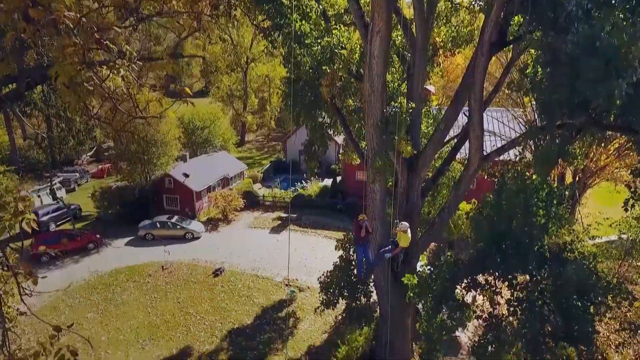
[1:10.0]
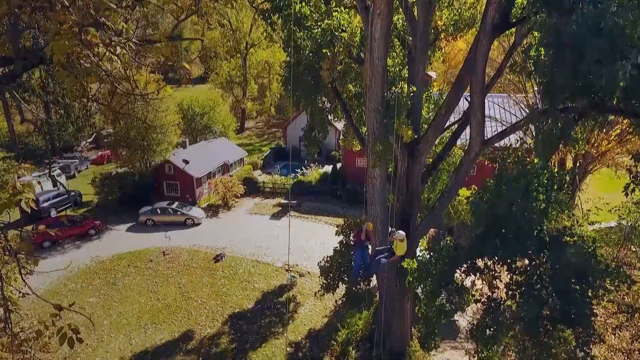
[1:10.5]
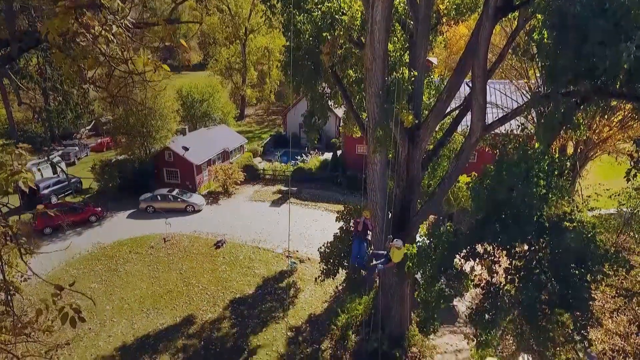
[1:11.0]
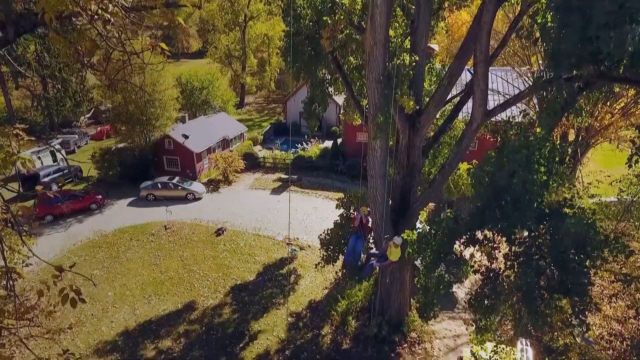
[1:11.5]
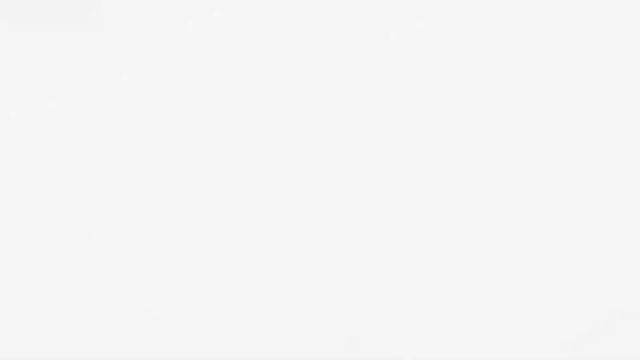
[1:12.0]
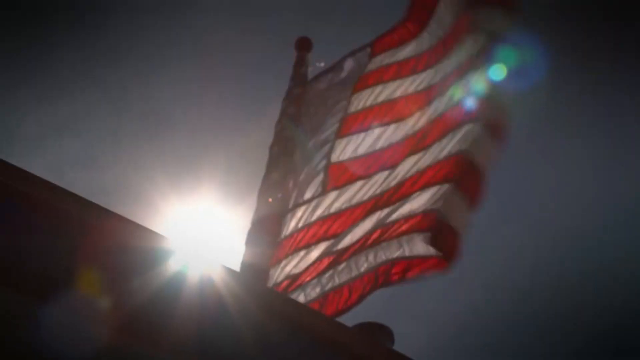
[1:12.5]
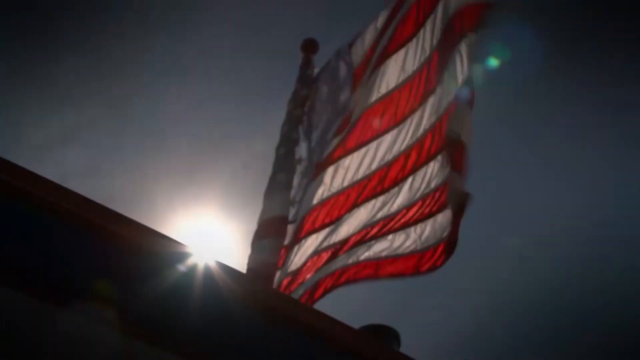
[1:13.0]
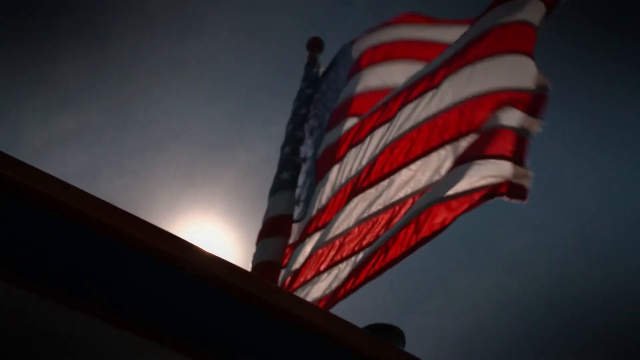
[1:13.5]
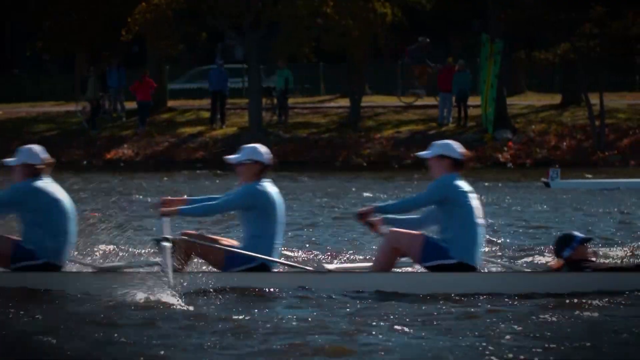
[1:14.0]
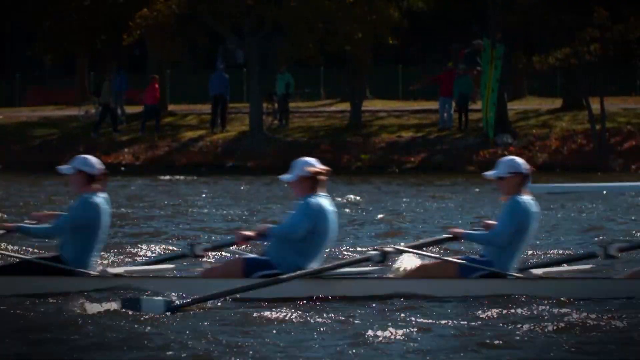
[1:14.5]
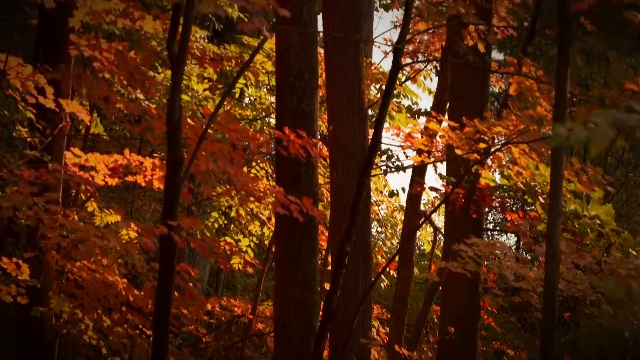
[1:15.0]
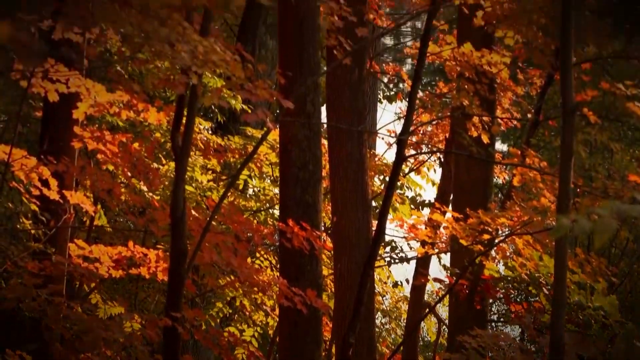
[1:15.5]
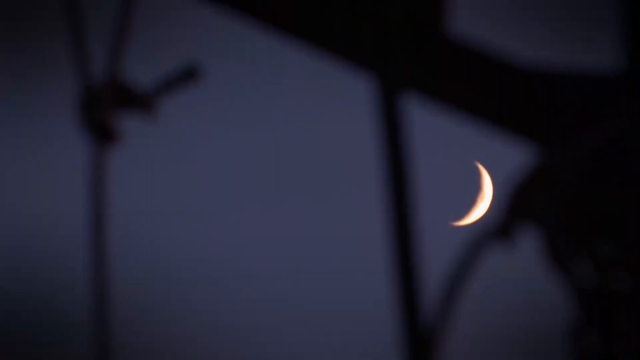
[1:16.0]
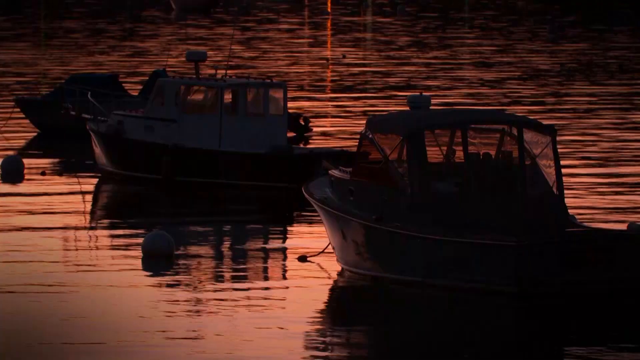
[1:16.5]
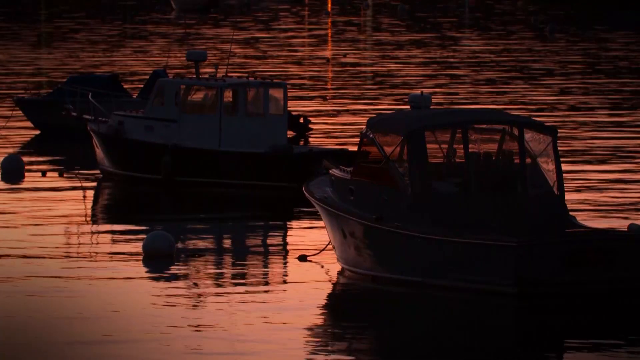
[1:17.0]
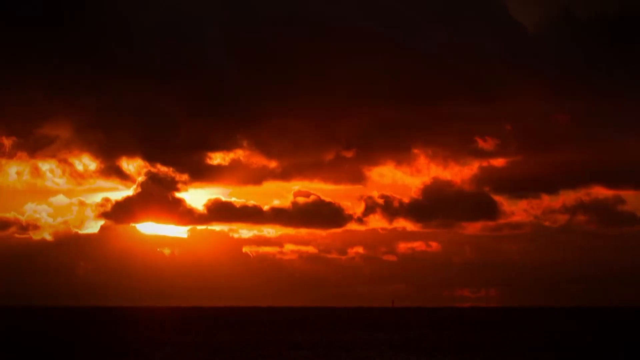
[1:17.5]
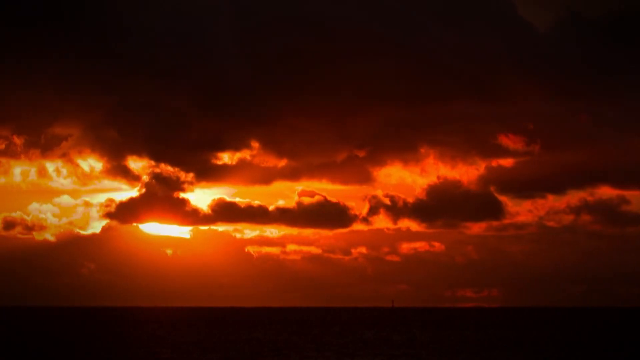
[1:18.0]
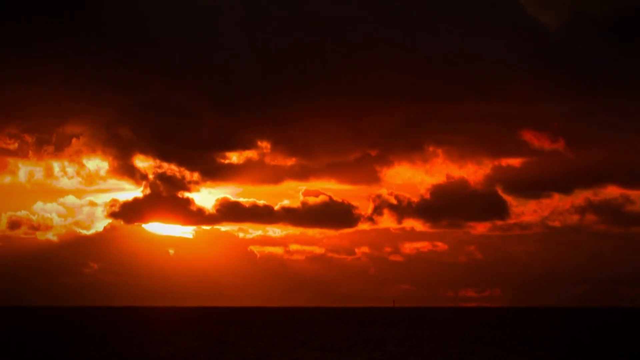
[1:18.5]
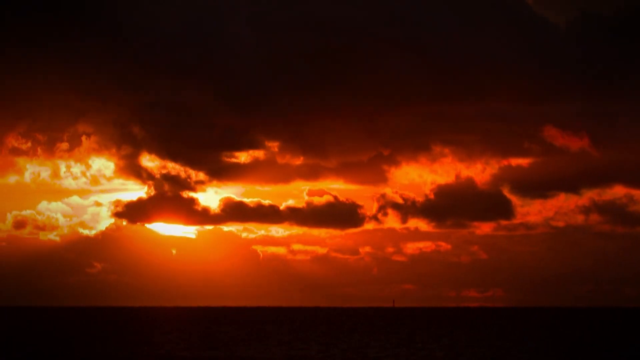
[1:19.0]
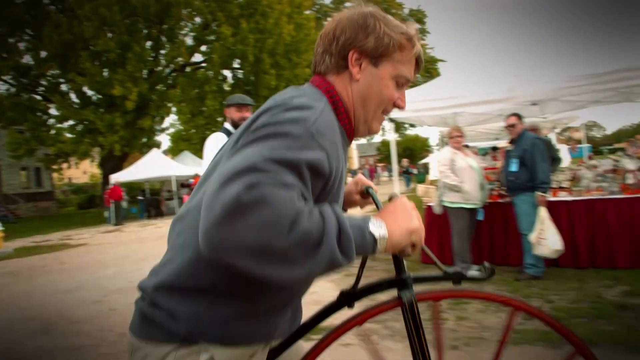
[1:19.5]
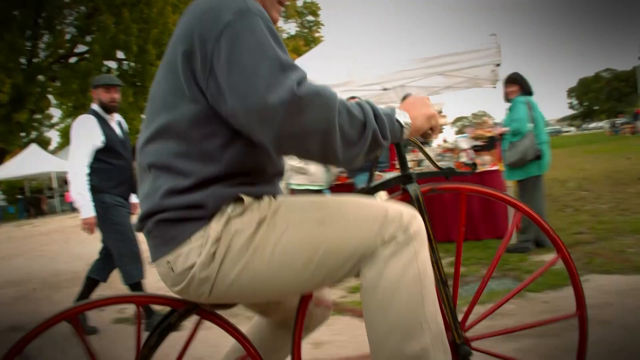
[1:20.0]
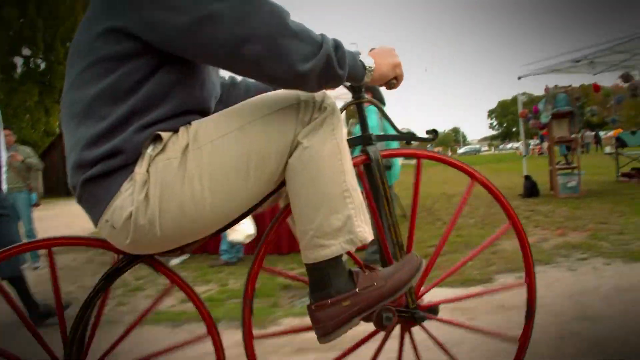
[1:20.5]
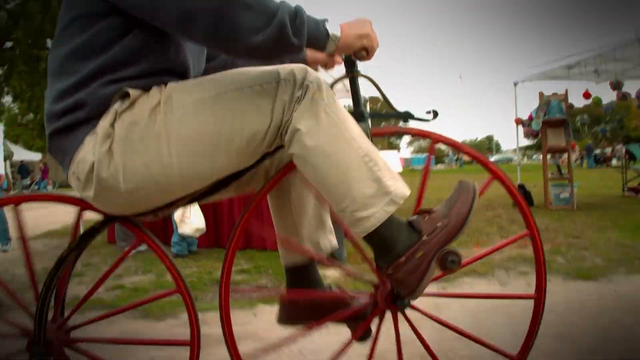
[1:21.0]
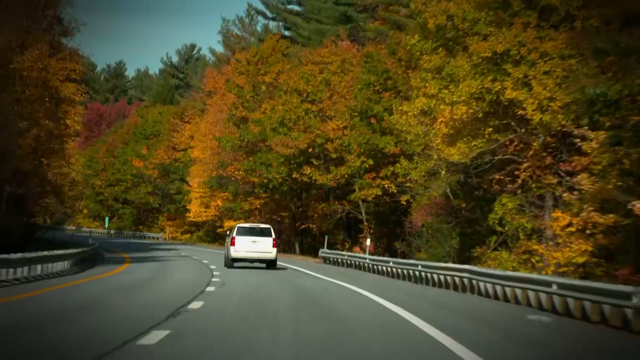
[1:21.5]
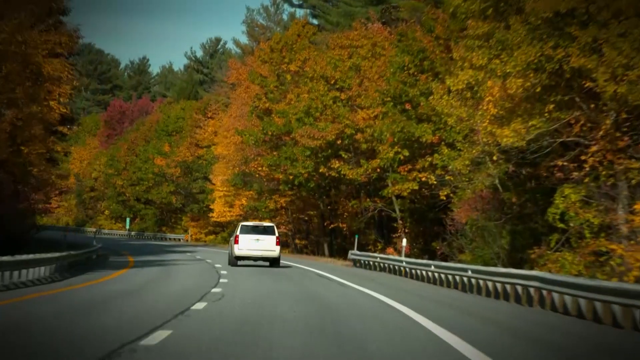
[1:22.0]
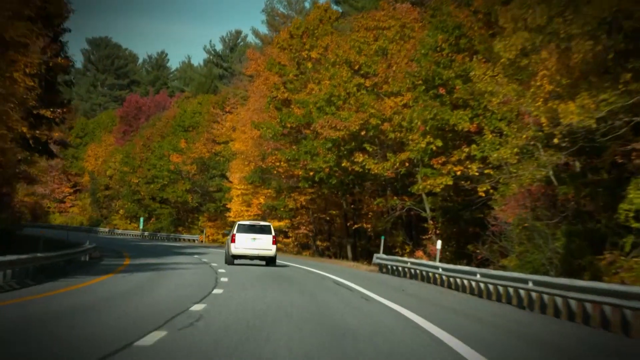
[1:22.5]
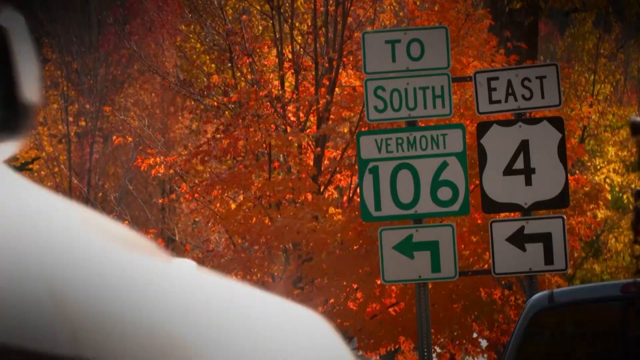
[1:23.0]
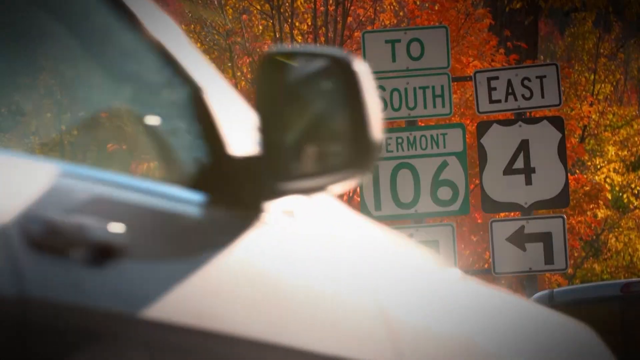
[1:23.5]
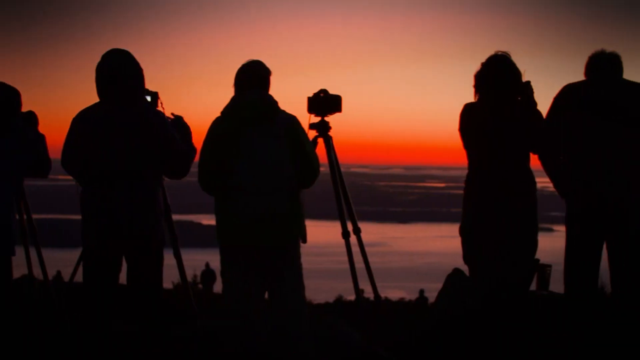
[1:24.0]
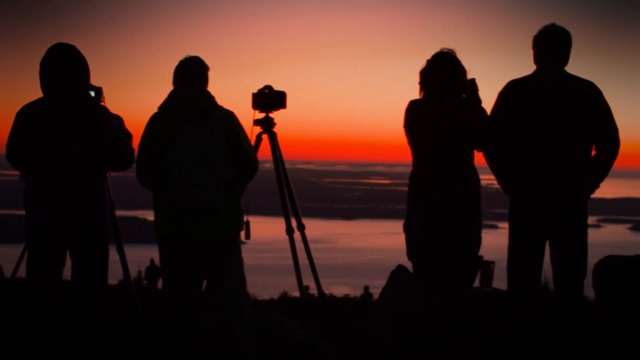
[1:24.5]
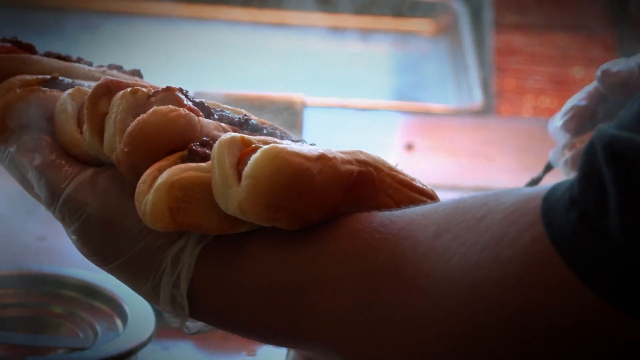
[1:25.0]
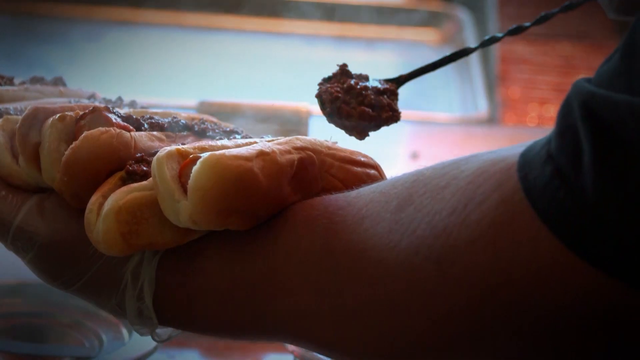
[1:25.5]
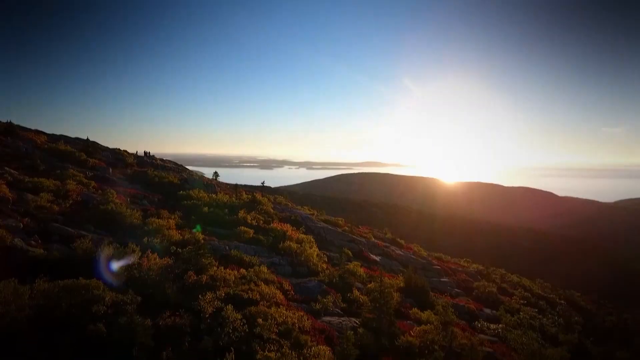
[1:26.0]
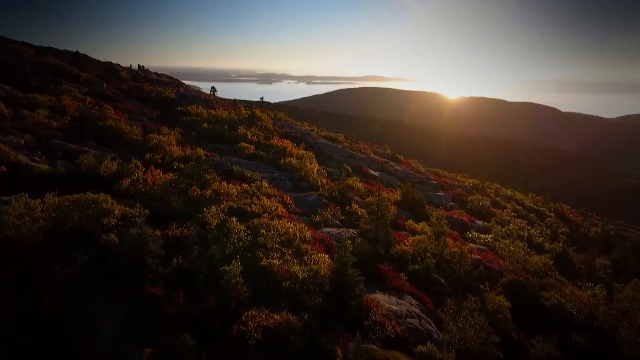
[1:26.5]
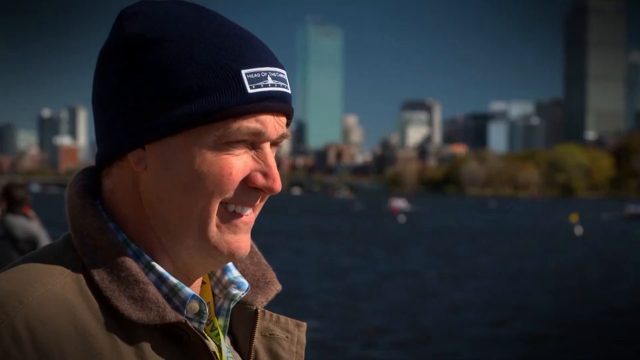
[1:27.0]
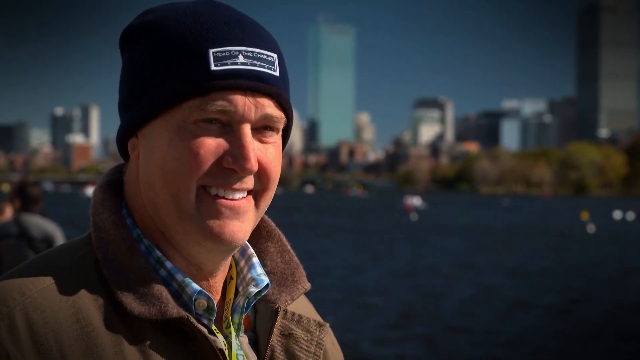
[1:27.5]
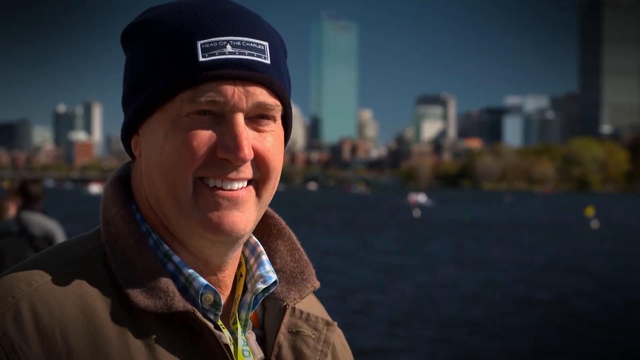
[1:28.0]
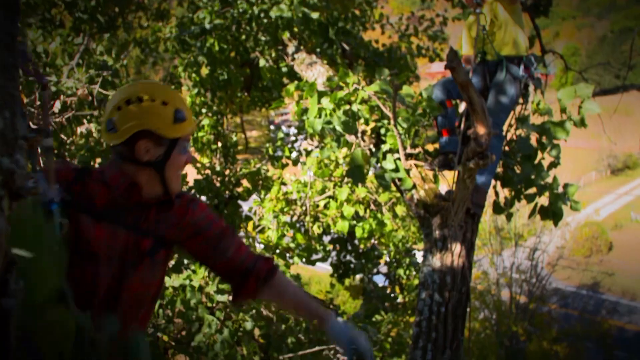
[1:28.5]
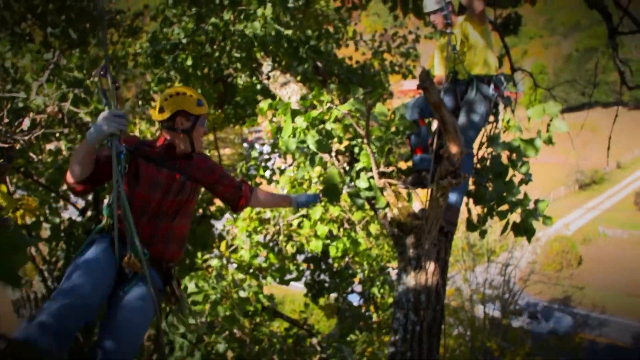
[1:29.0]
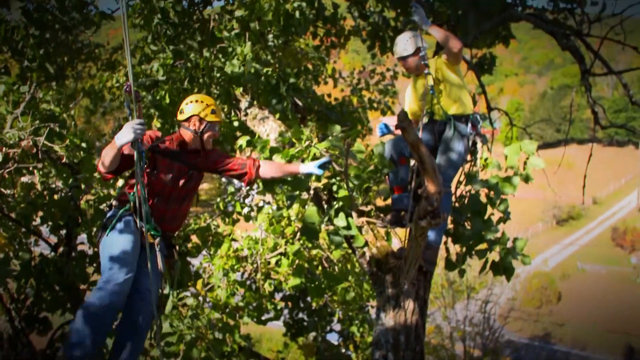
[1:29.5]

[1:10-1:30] An aerial shot shows the men wearing hard hats and harnesses in the trees, with ropes hanging down. Buildings with pitched roofs and parked cars are in the background. The two men slide down the ropes to the bottom. A large American stars-and-stripes flag blows in the breeze at the top of a flagpole against a blue sky, with the sun shining brightly behind. A rowing team then rows past on a river from the left of the screen to the right, wearing pale blue or white caps and blue long-sleeved tops. Boats are illuminated by the sunset; three small boats are lined up one in front of another diagonally. The sunset follows, in a cloudy sky with the sun peeping through.